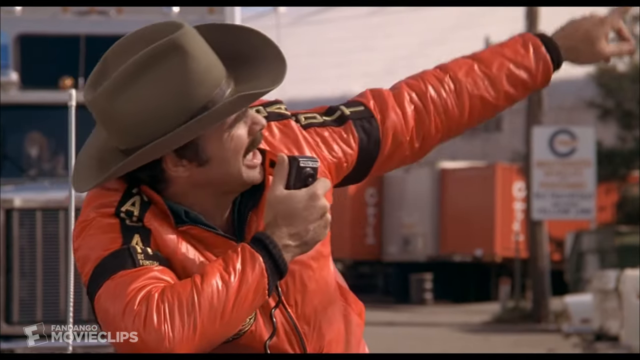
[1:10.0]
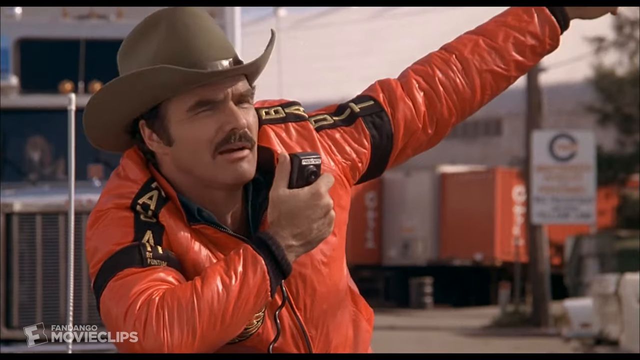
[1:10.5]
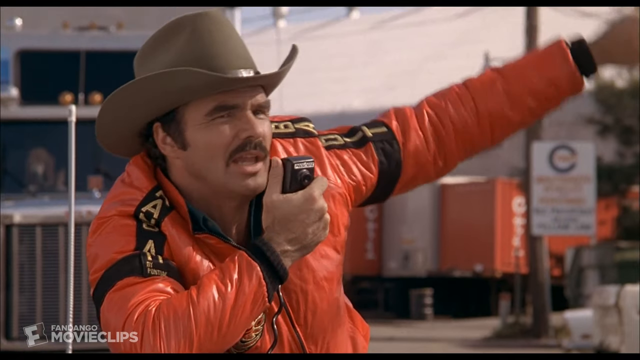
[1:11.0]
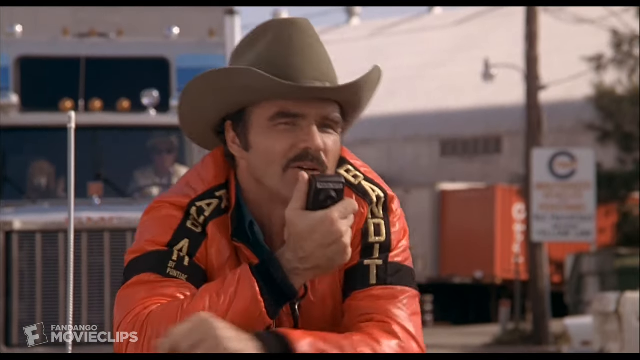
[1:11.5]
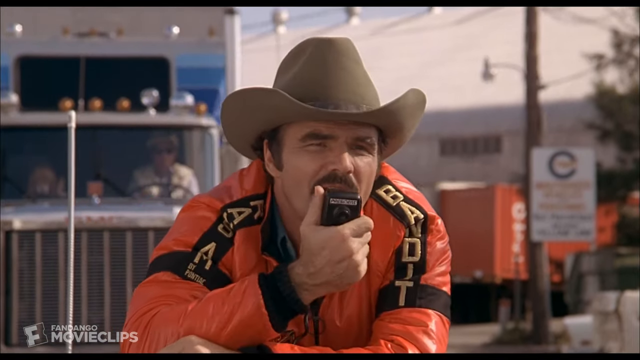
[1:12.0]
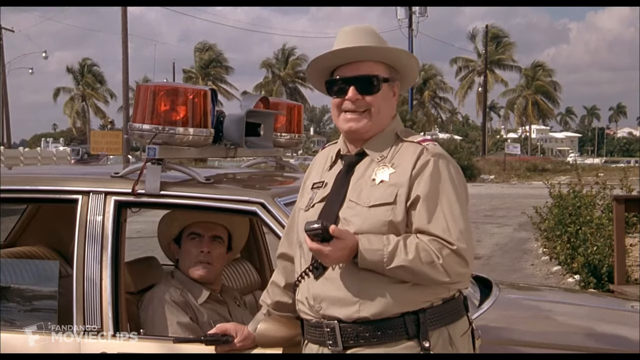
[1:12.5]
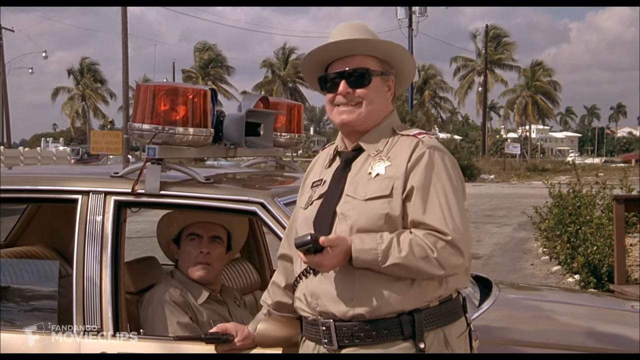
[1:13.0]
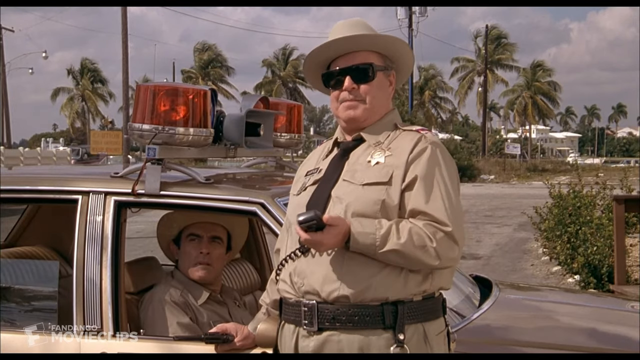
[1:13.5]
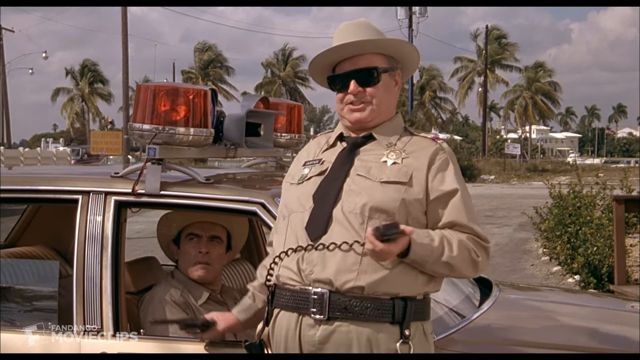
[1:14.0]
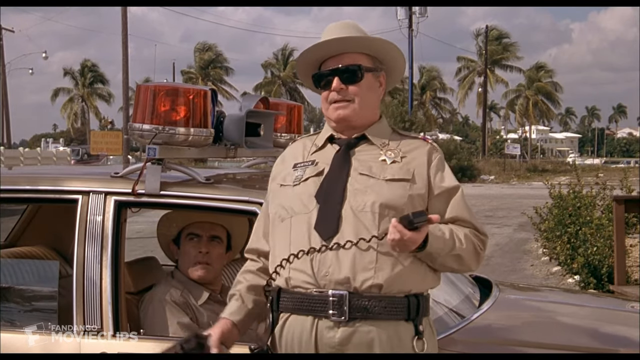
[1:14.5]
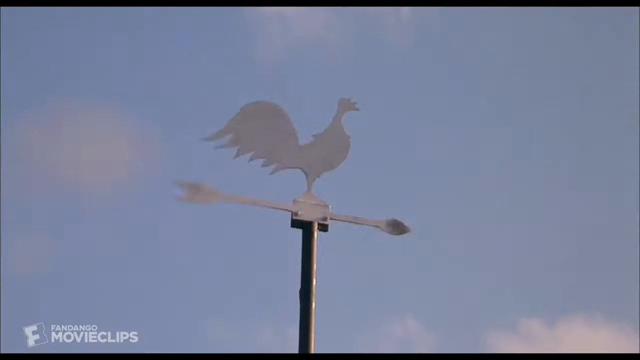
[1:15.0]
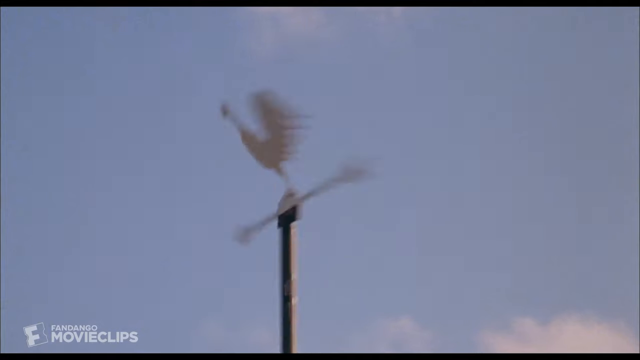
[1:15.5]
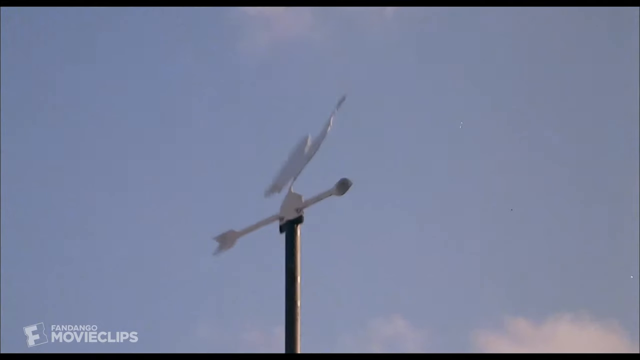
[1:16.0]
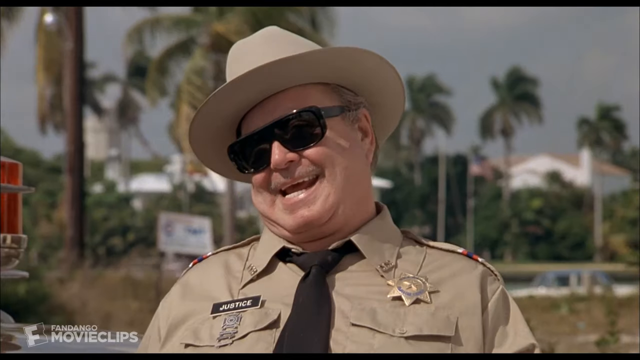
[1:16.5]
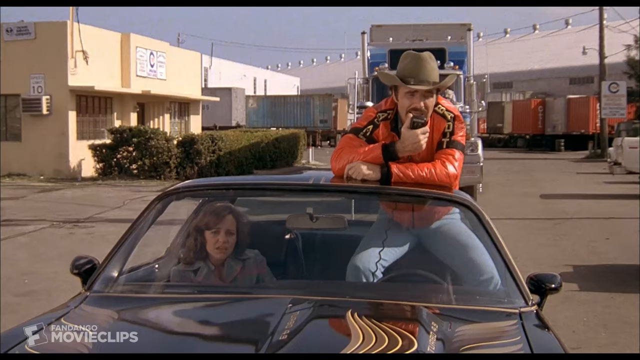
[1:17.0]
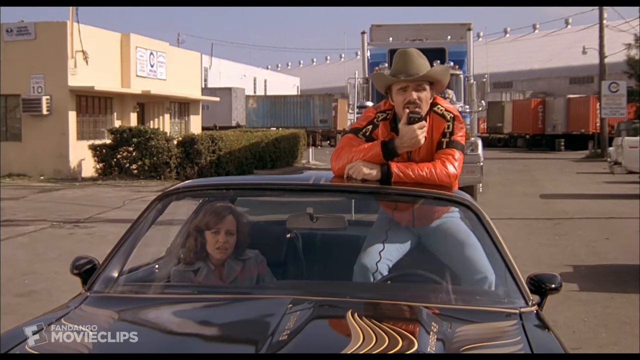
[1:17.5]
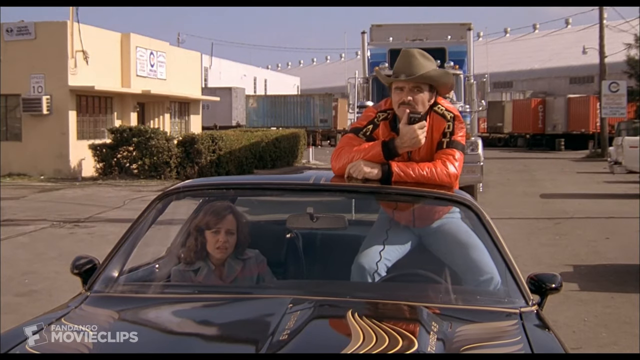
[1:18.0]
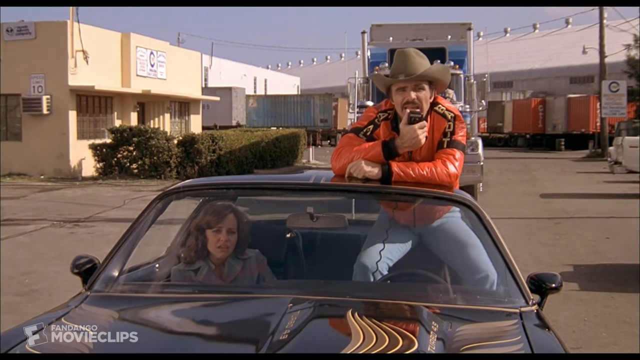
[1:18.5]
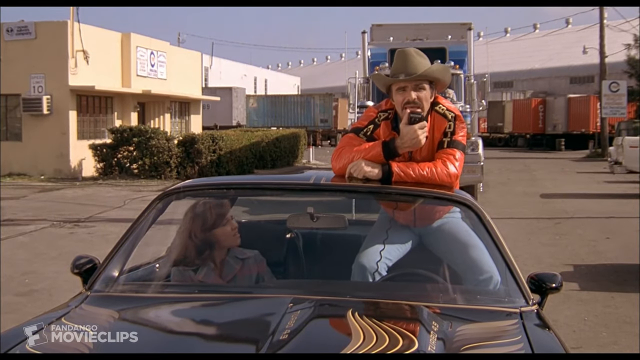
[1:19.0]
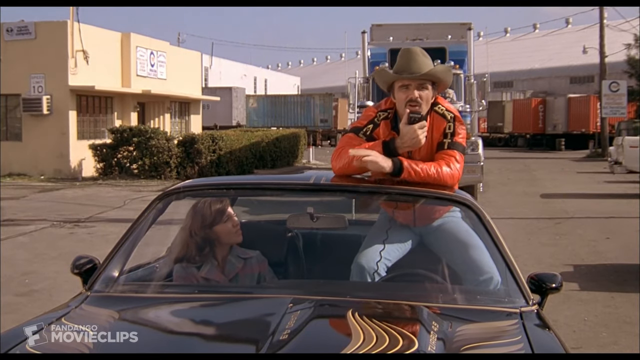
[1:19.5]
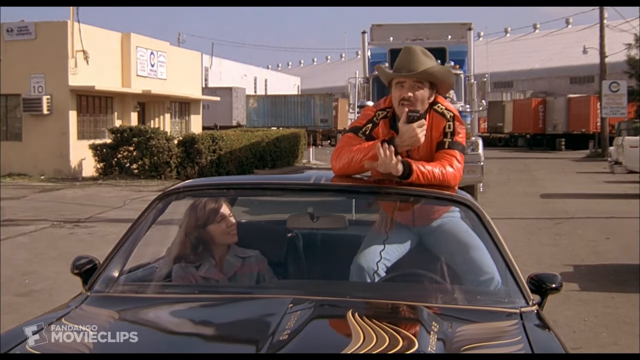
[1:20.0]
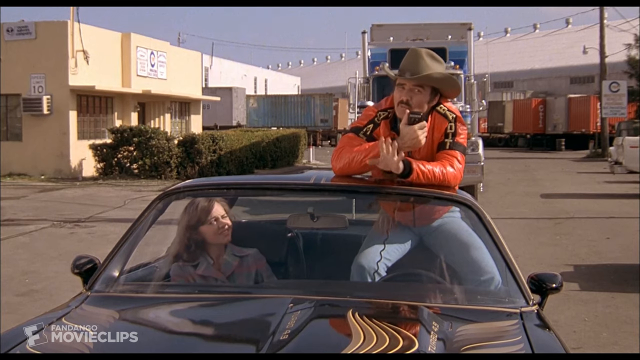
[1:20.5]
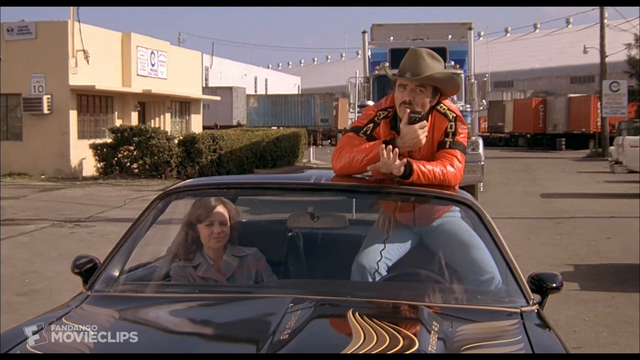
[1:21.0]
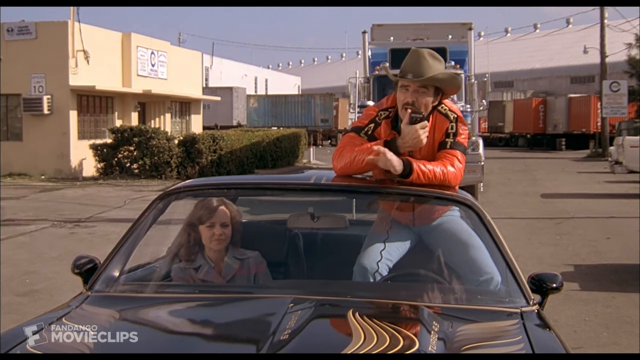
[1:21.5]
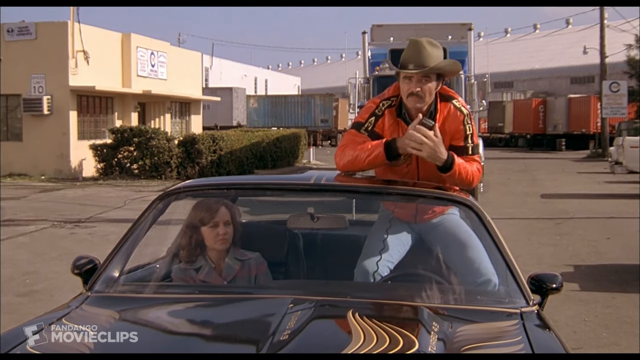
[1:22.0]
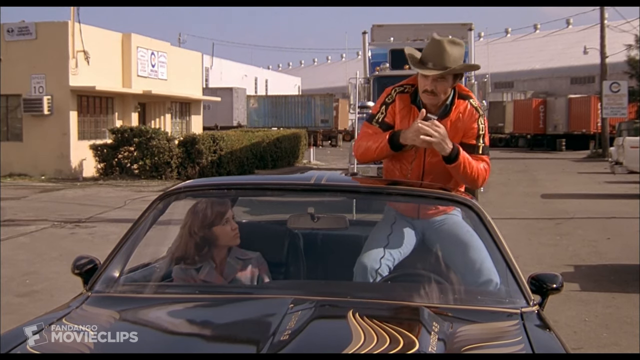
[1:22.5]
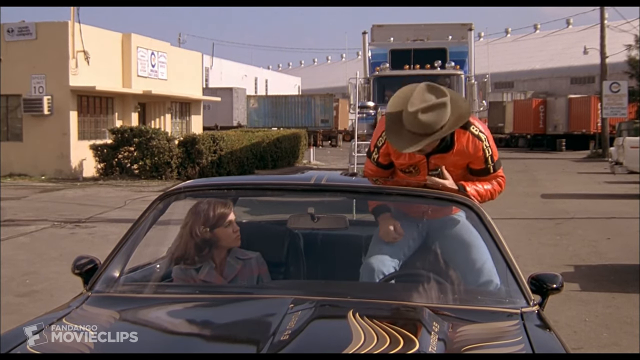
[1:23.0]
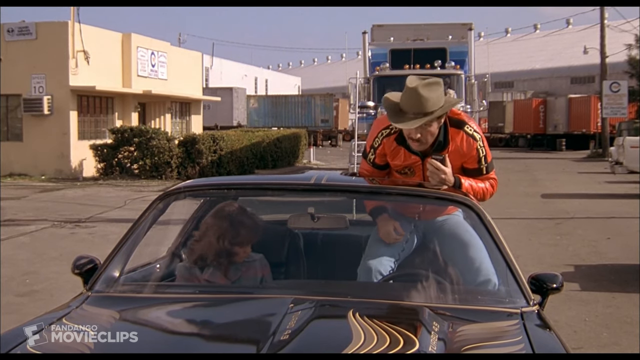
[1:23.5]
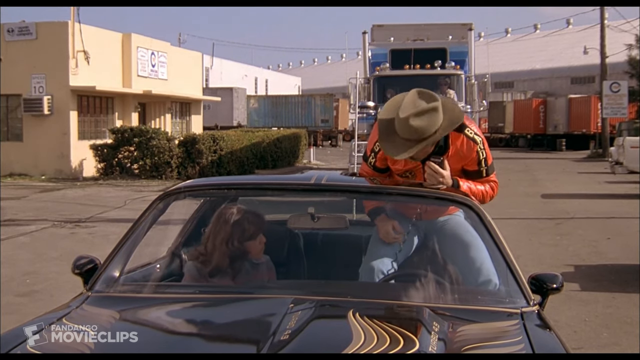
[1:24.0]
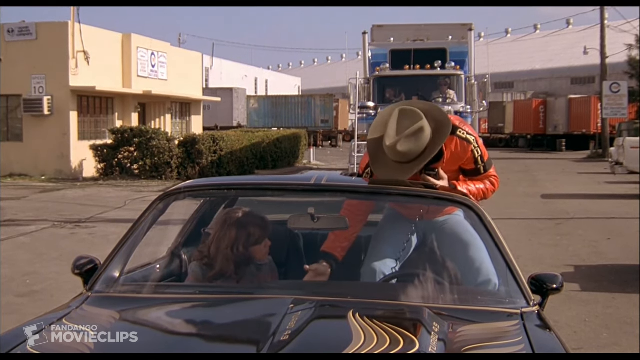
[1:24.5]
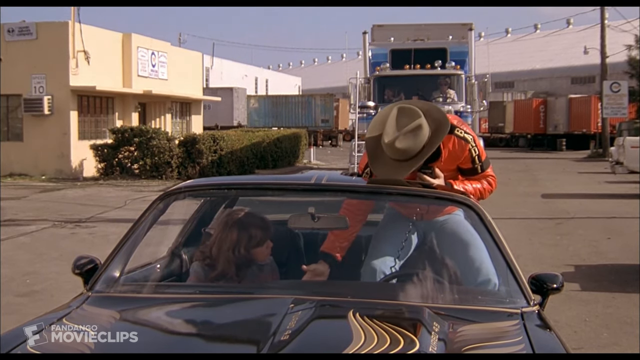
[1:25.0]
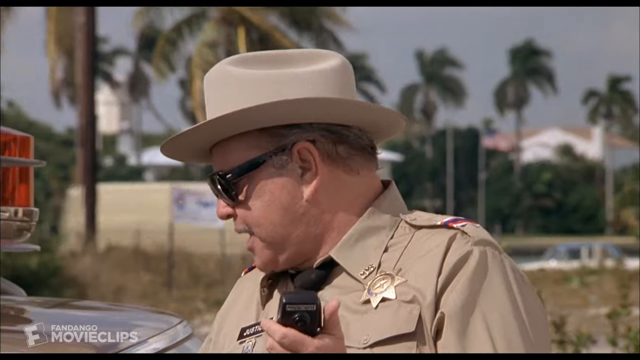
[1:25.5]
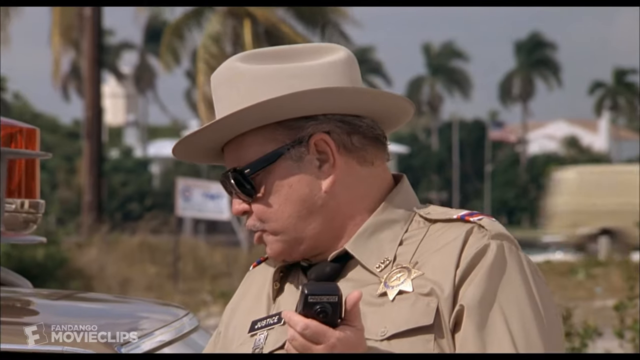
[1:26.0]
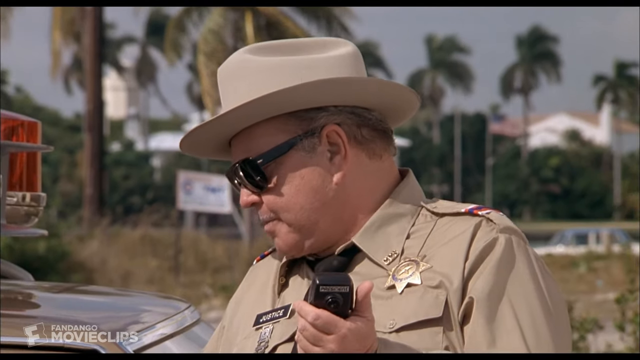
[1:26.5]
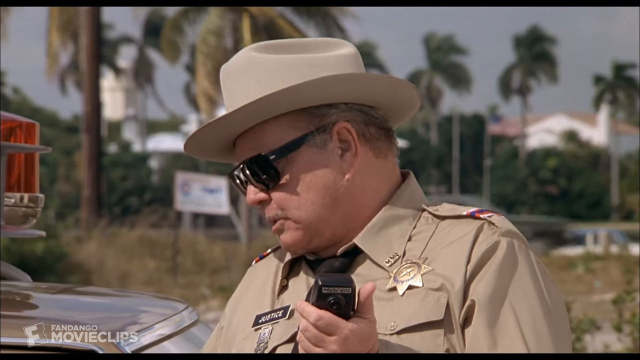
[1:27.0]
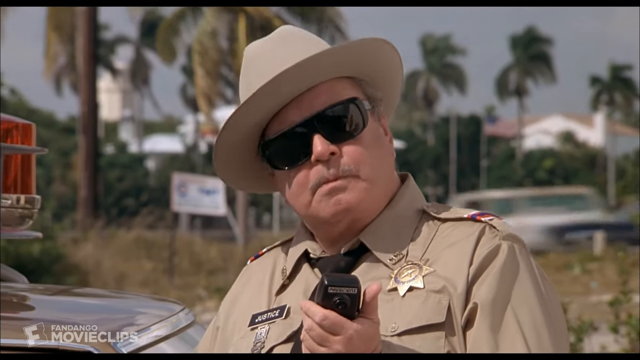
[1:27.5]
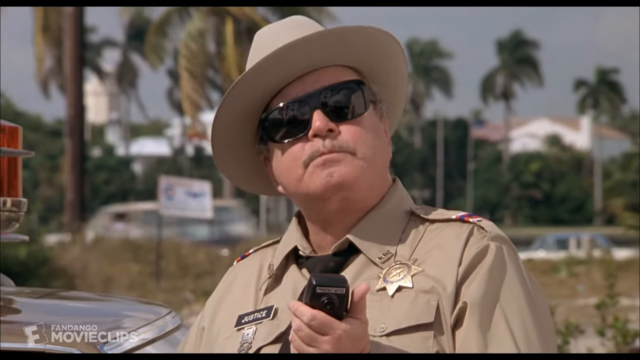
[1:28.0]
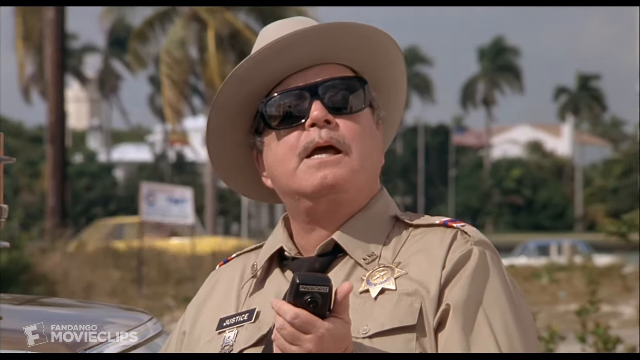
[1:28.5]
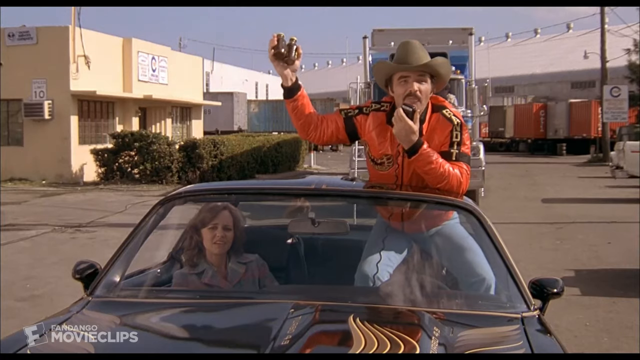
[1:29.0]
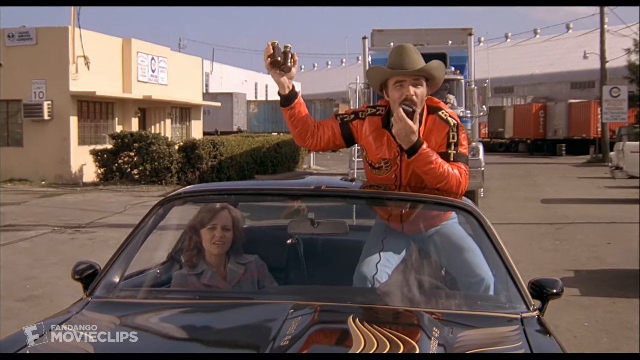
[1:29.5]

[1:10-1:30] He points with his left hand as if to go far. The policeman keeps talking and laughing, and fires one more time at one of the windmills in the middle of the street, which has a drawn rooster pointing in a direction; the windmill spins around several times. The man in the orange shirt raises his left arm and shows his five fingers in a typical gesture telling the policeman to calm down and stop shooting. A woman is next to him, and he asks her something. Meanwhile, the policeman talks to his colleague inside the car, who never leaves the car. The policeman outside keeps talking and screaming.